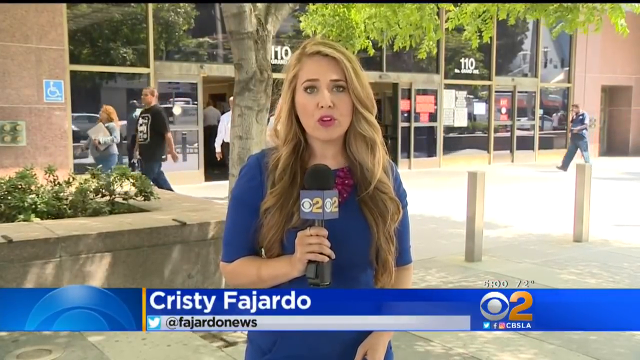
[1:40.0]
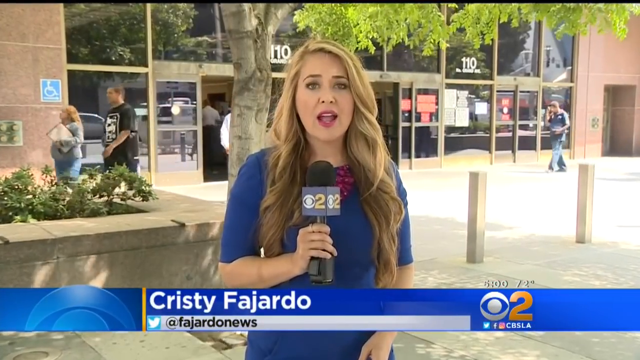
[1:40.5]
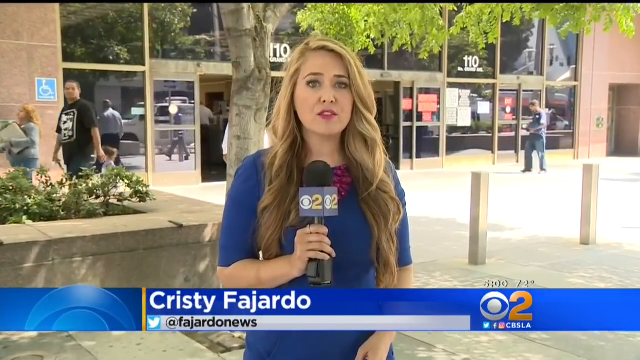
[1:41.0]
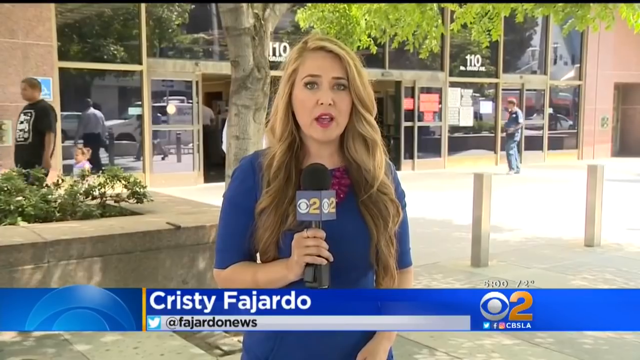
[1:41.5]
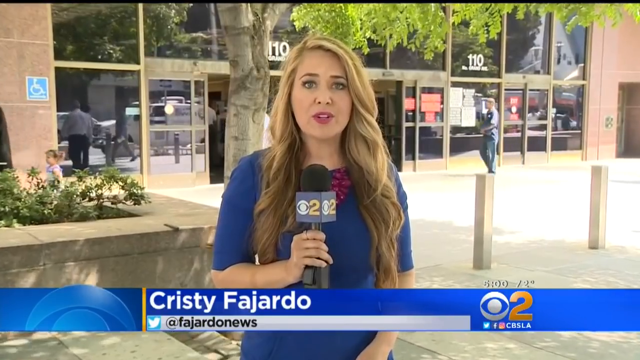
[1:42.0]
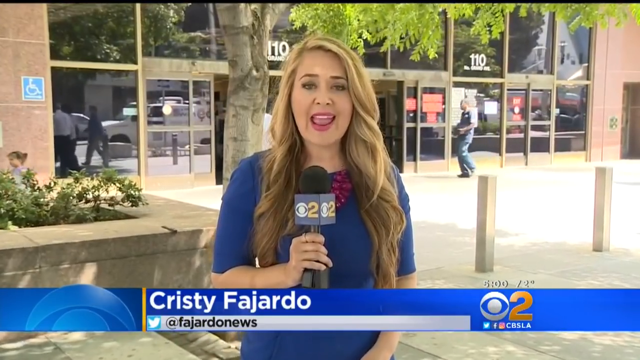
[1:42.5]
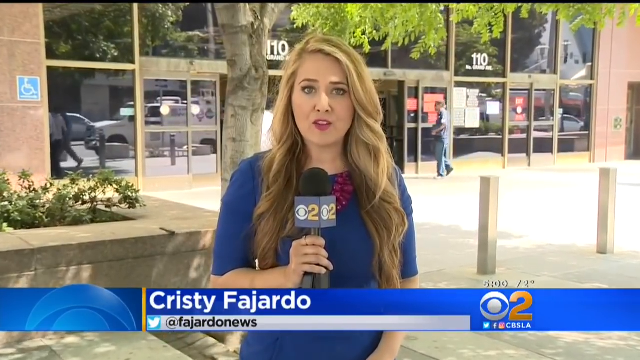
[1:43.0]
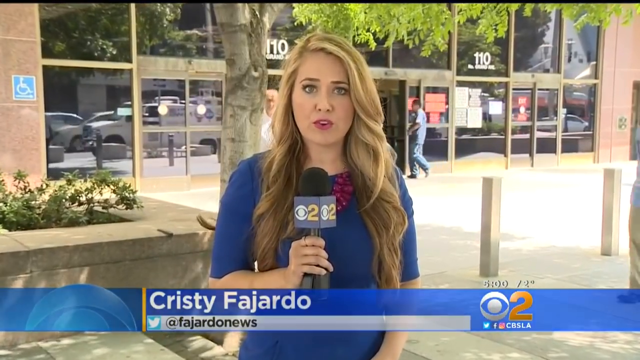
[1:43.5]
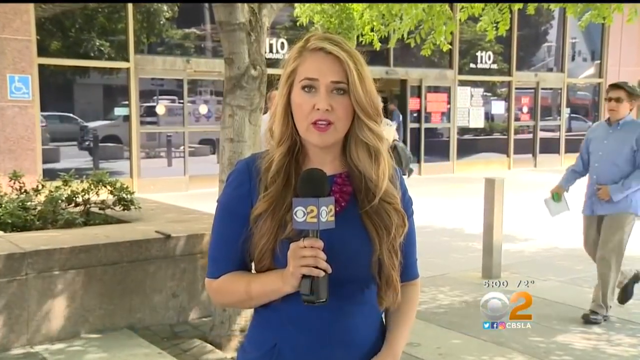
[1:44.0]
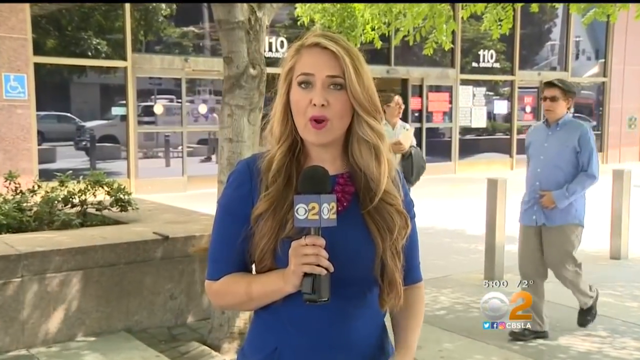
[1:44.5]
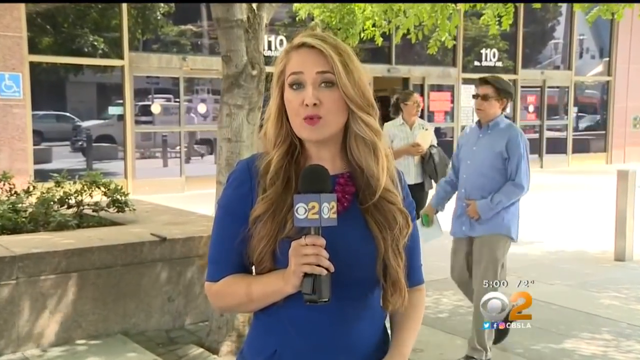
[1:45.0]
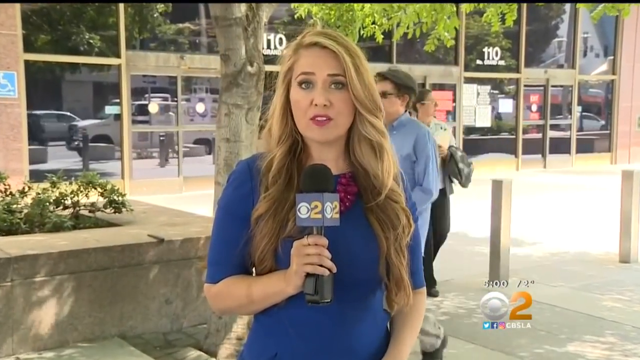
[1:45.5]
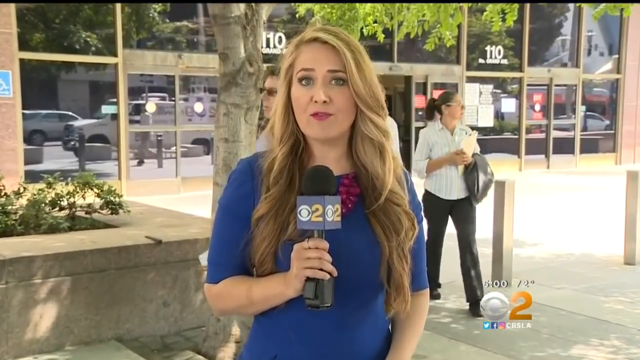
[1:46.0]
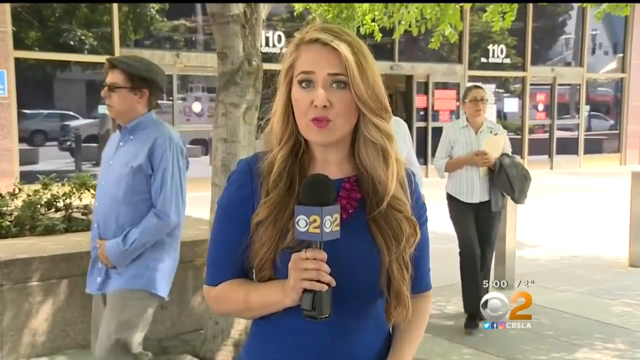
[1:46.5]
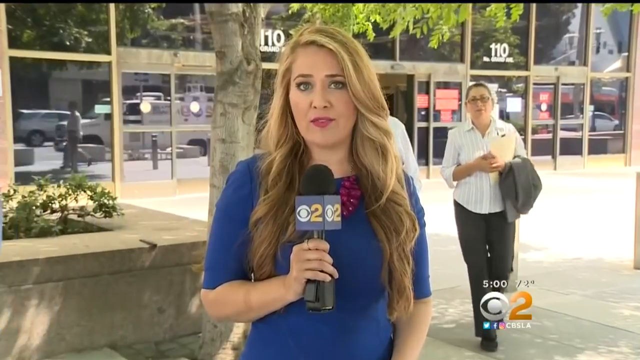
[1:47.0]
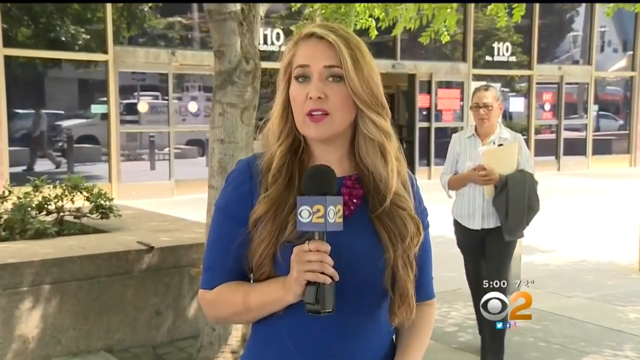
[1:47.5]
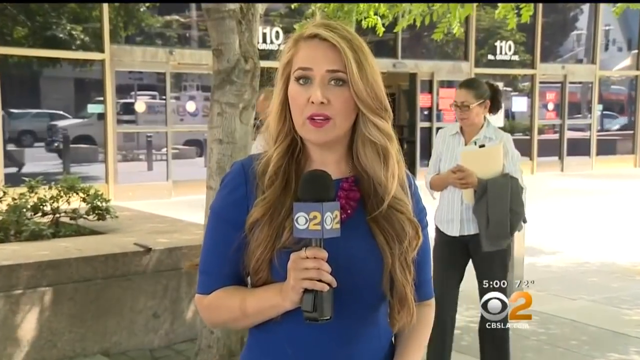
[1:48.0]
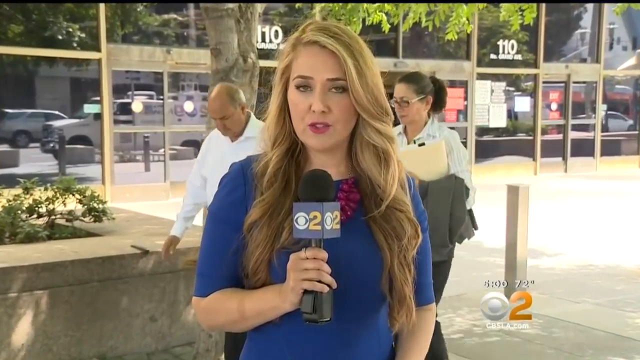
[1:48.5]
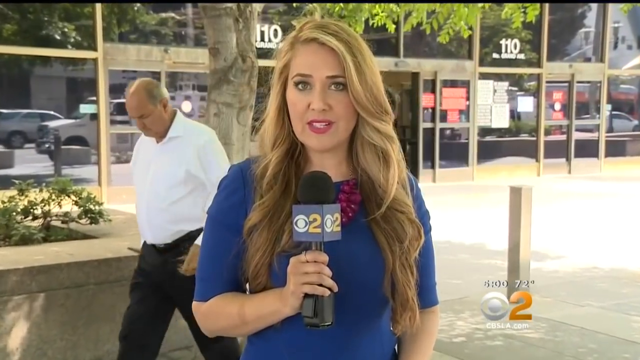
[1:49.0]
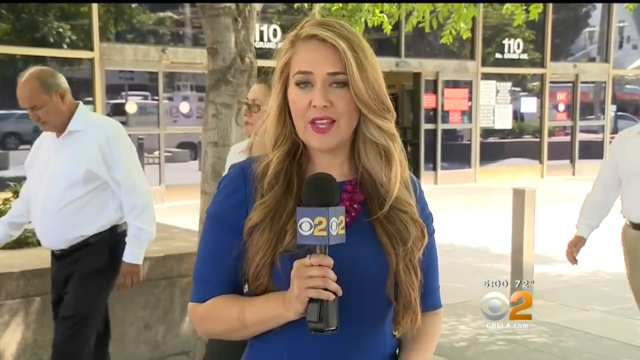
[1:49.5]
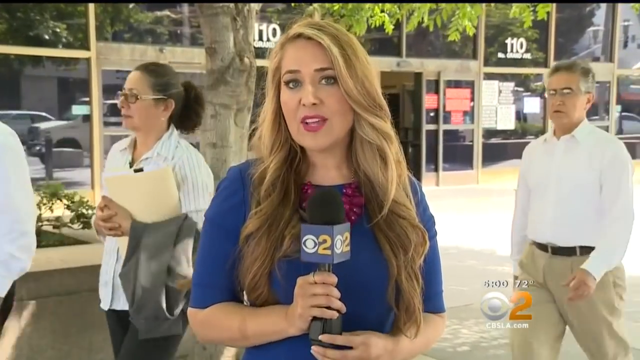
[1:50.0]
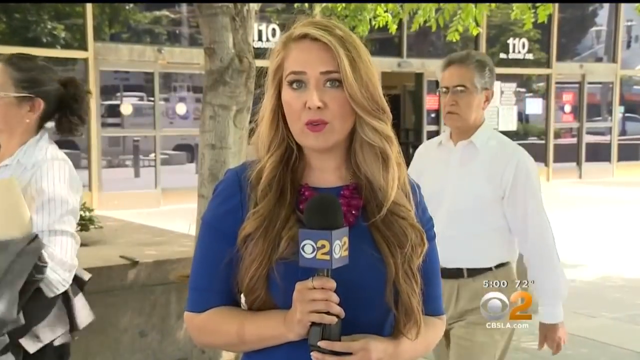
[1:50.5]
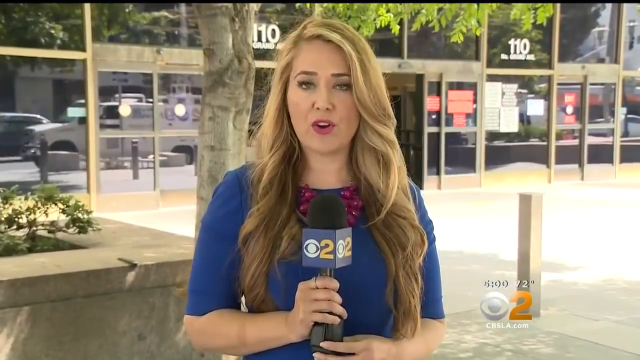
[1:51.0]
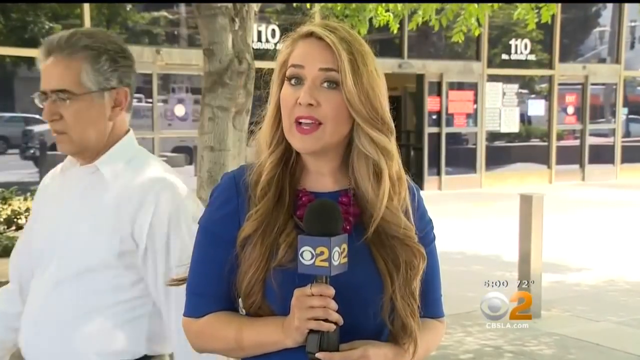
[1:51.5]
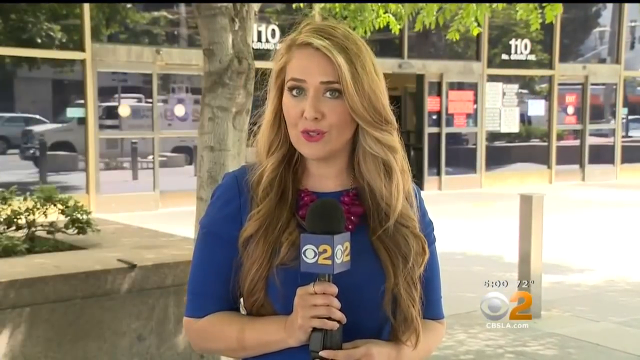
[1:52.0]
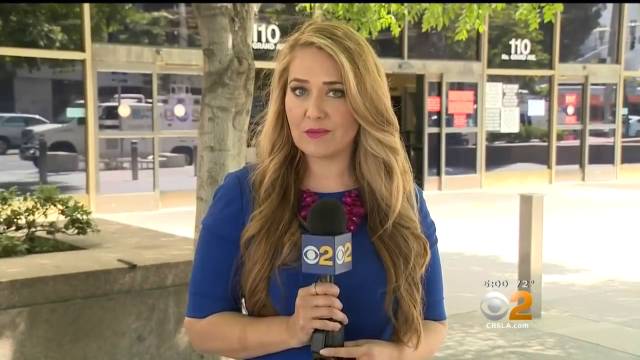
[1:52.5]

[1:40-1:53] Christy Fajardo reports on the Depp couple's situation, talking toward the camera while people come and go in the background. A man in a blue shirt with glasses walks by. A woman with glasses walks toward the camera before moving to the side, next to a bald man in a shirt and black pants. Another man in a shirt and khaki pants, also wearing glasses, comes toward the camera and then walks past the reporter. The place is very crowded, full of people.